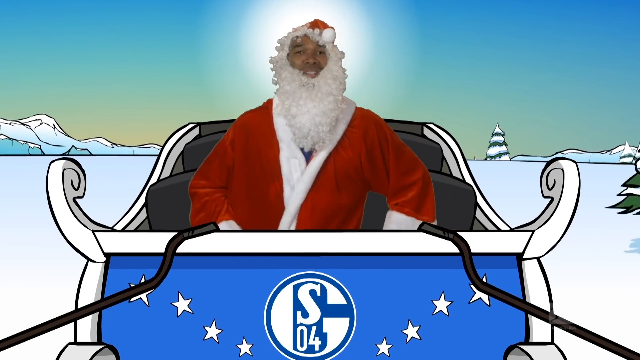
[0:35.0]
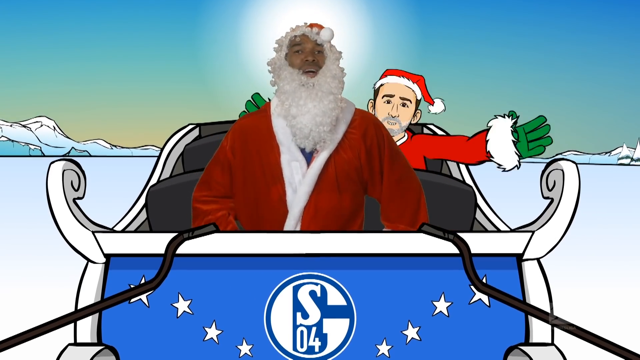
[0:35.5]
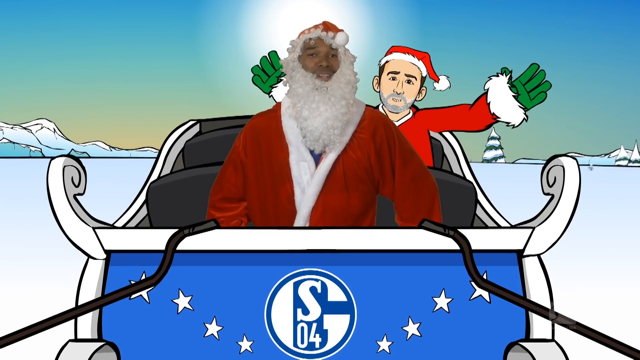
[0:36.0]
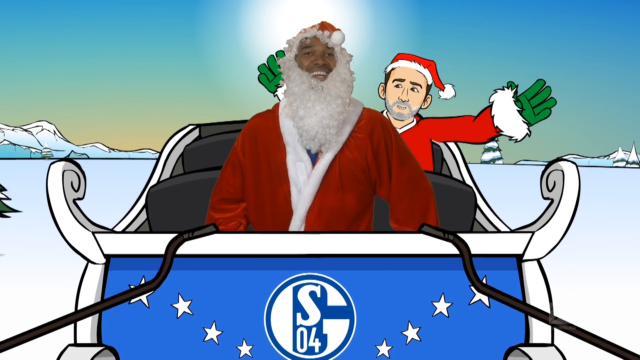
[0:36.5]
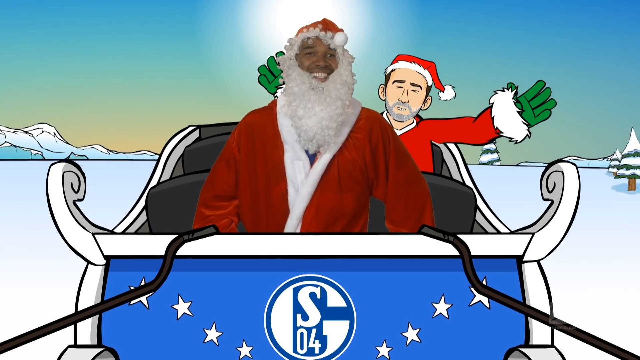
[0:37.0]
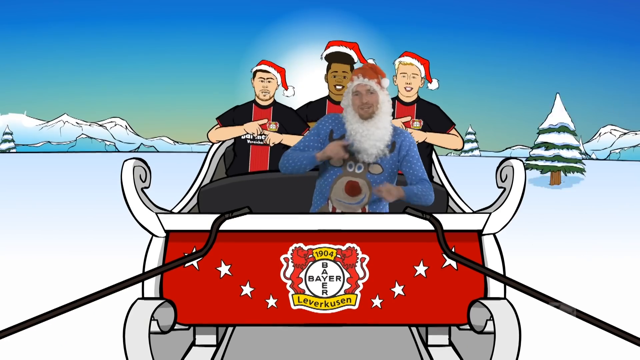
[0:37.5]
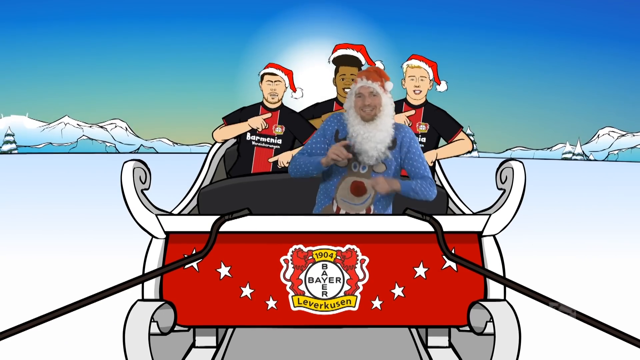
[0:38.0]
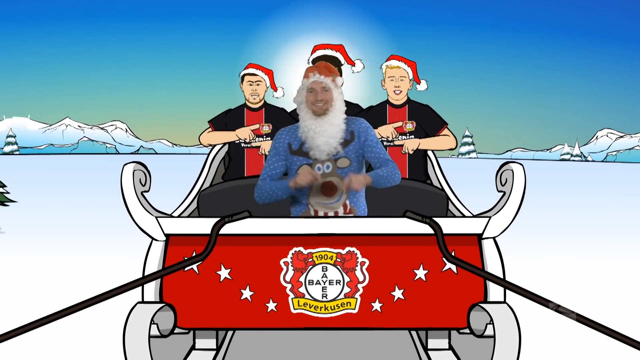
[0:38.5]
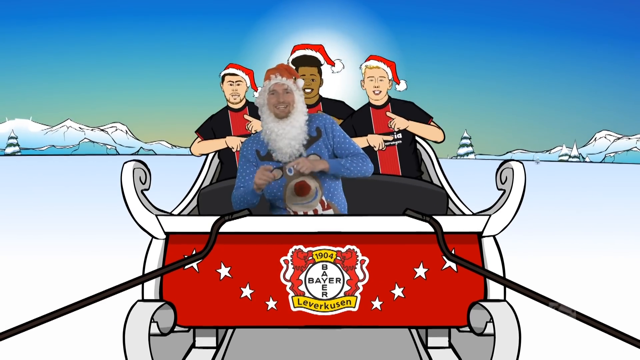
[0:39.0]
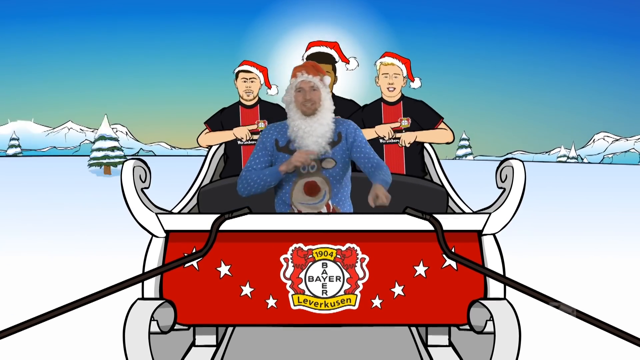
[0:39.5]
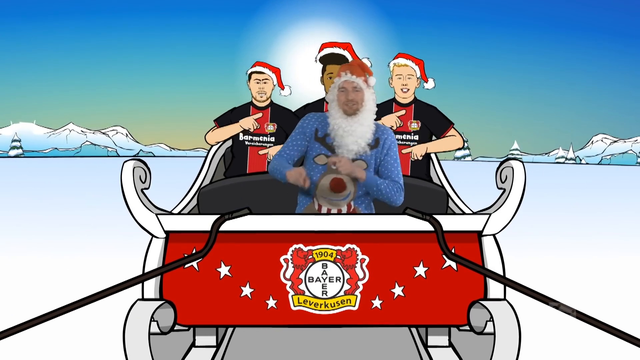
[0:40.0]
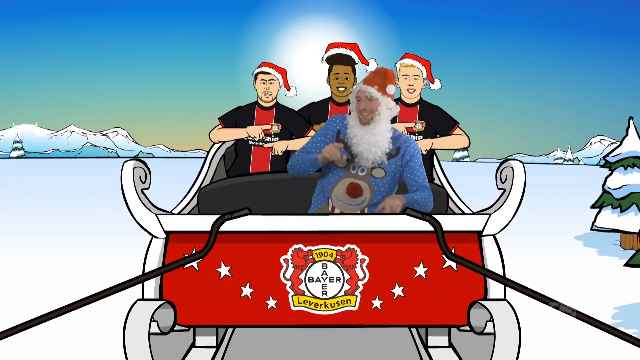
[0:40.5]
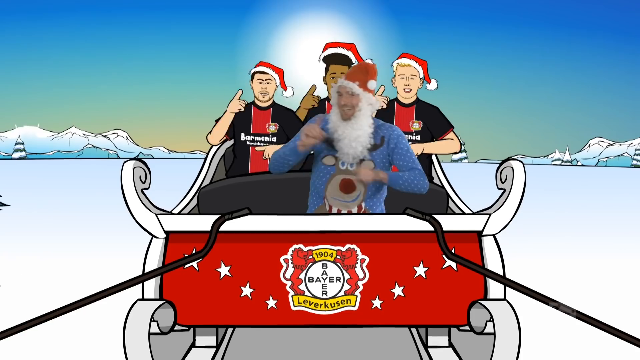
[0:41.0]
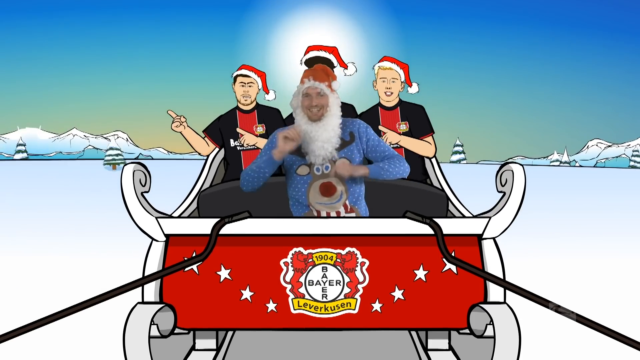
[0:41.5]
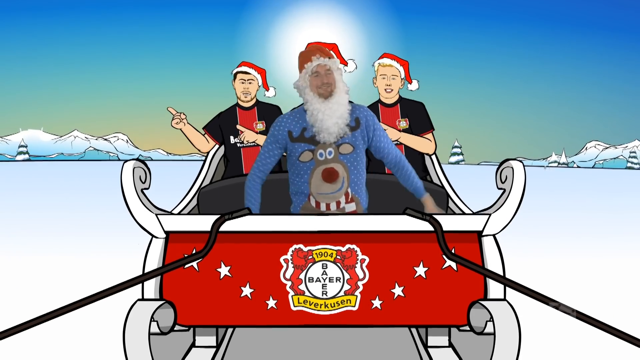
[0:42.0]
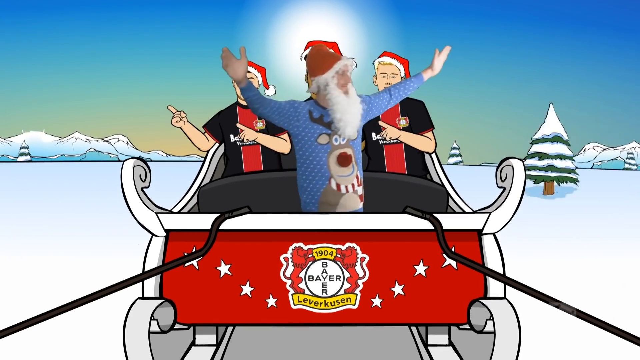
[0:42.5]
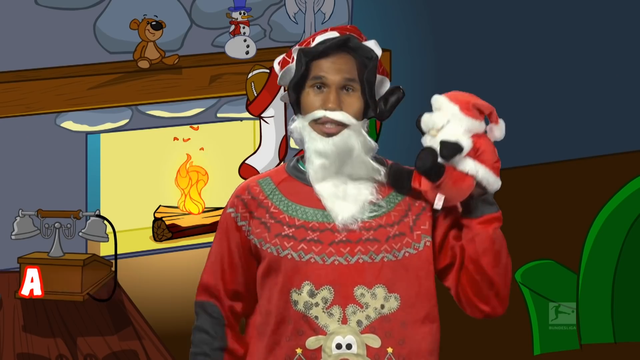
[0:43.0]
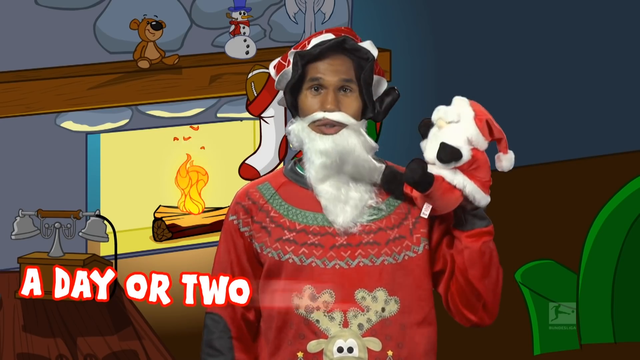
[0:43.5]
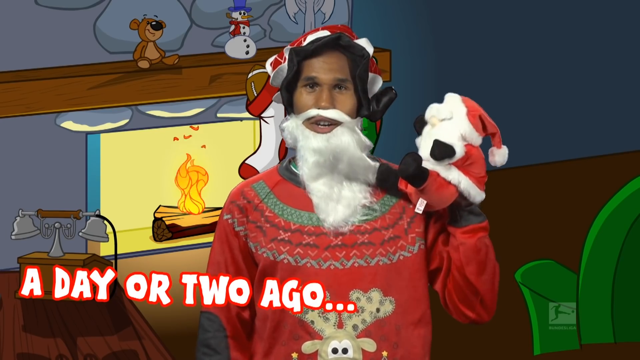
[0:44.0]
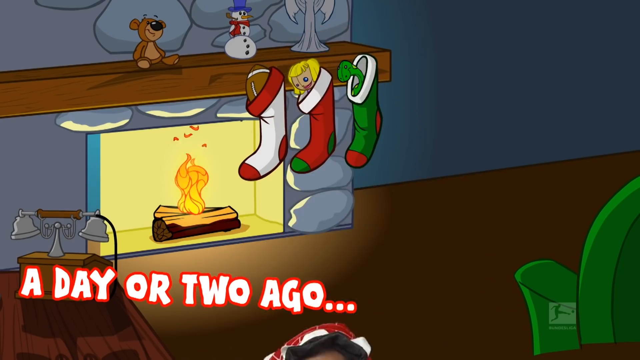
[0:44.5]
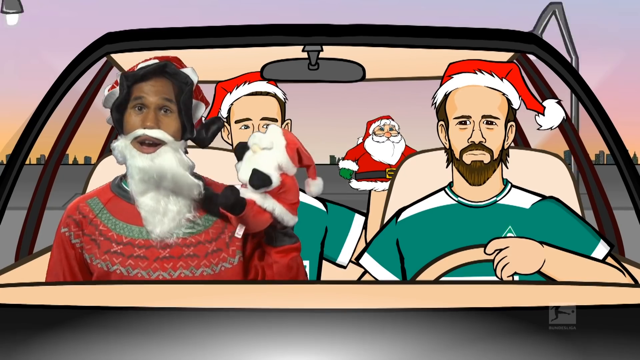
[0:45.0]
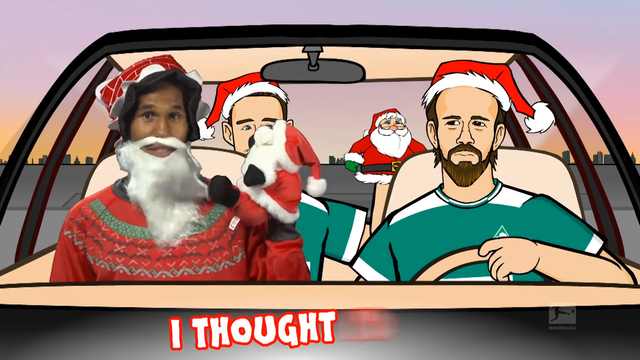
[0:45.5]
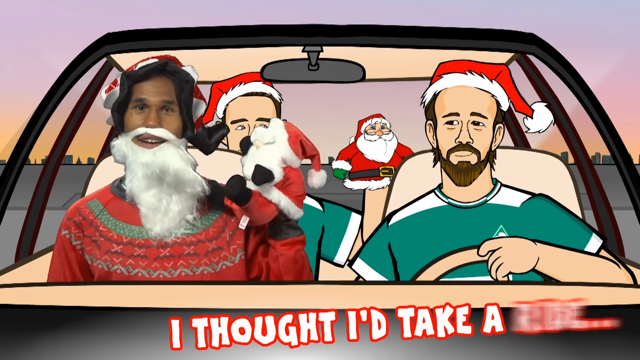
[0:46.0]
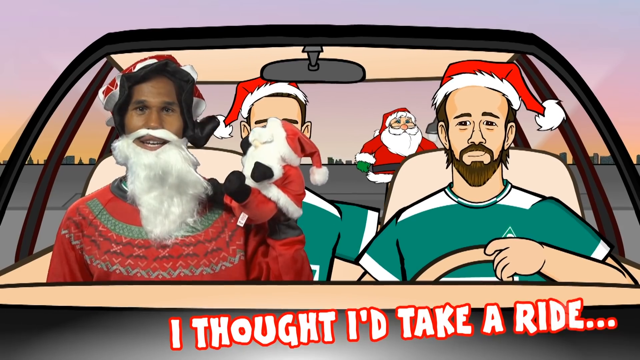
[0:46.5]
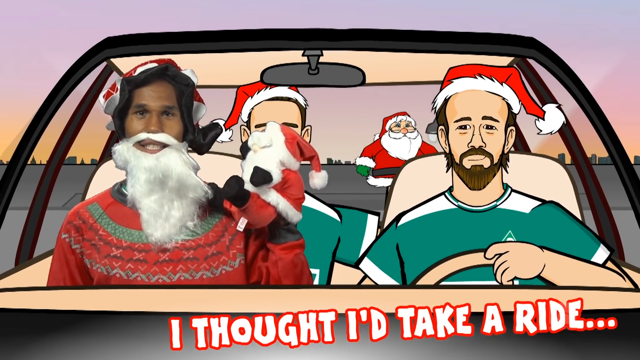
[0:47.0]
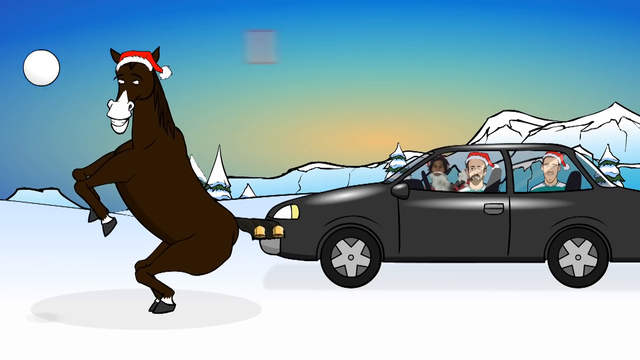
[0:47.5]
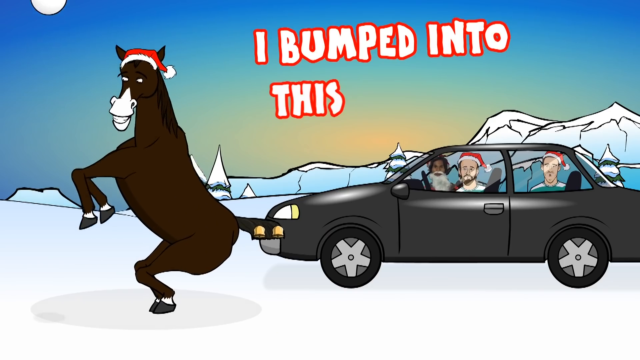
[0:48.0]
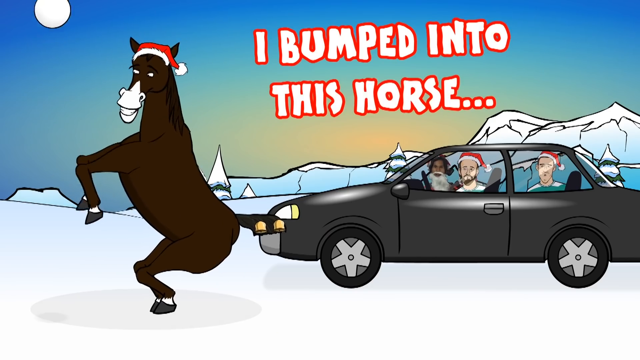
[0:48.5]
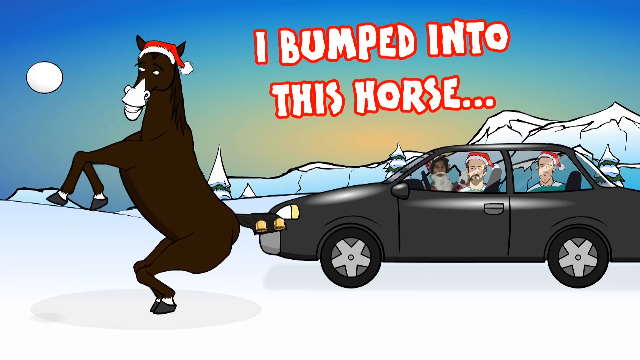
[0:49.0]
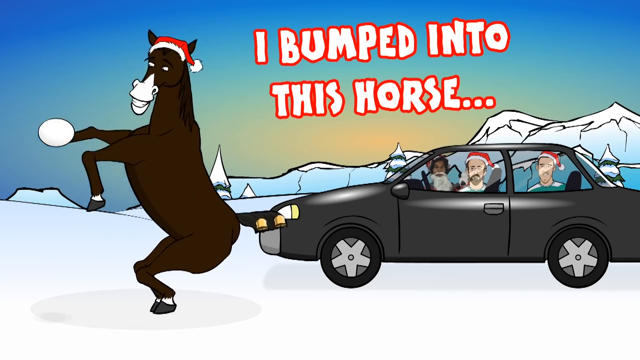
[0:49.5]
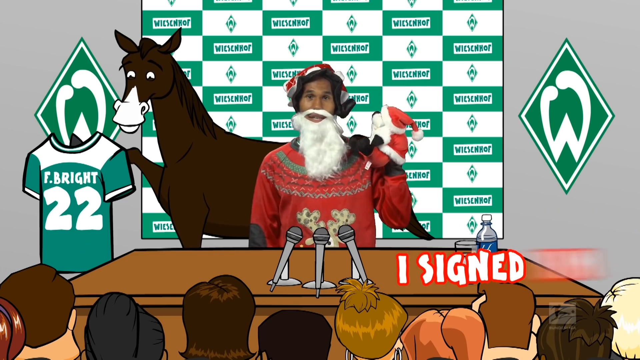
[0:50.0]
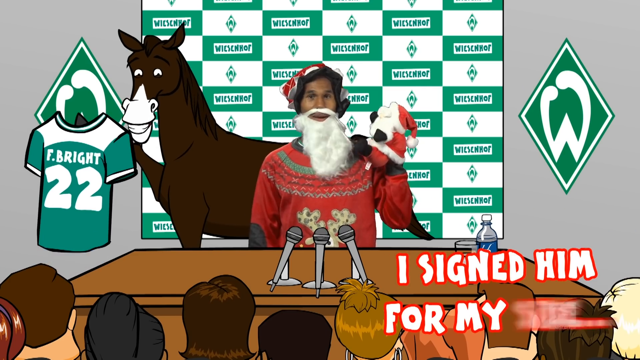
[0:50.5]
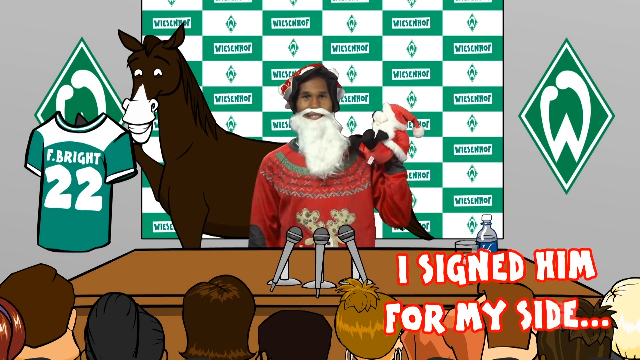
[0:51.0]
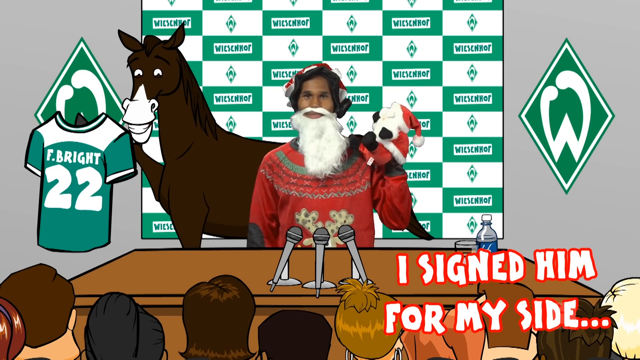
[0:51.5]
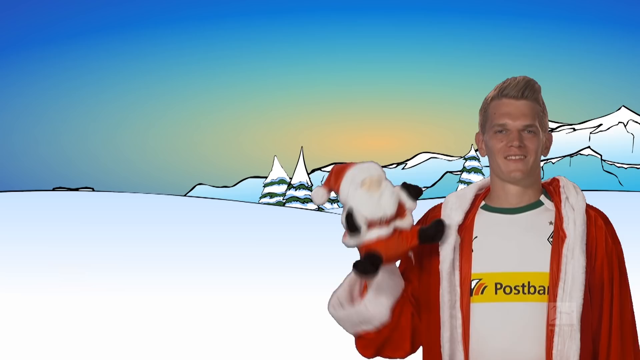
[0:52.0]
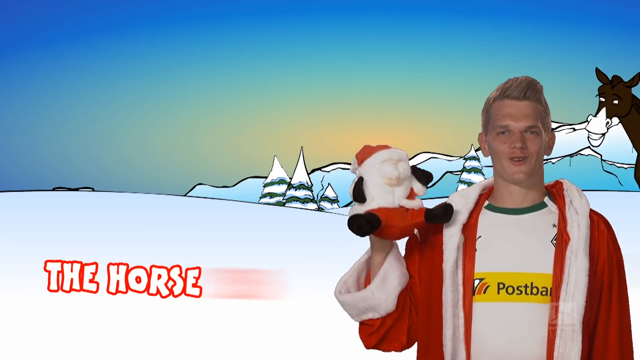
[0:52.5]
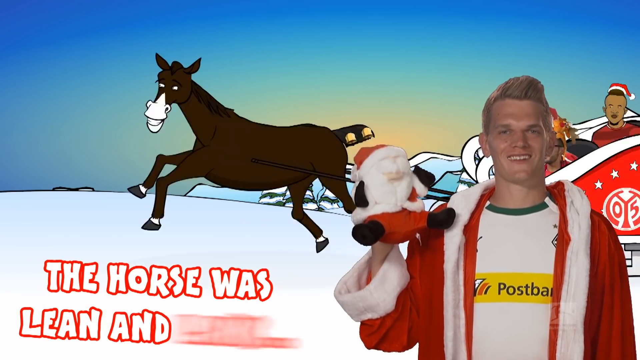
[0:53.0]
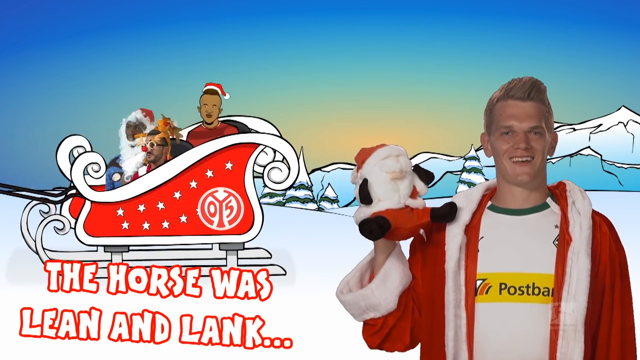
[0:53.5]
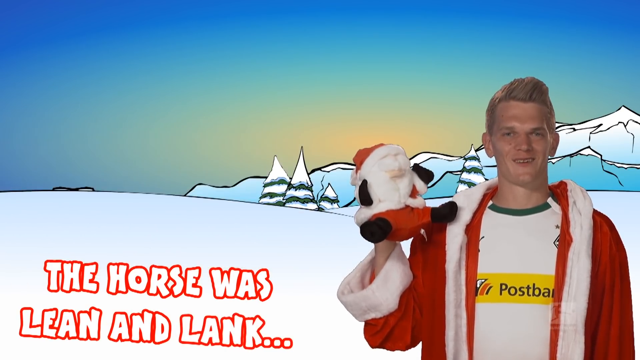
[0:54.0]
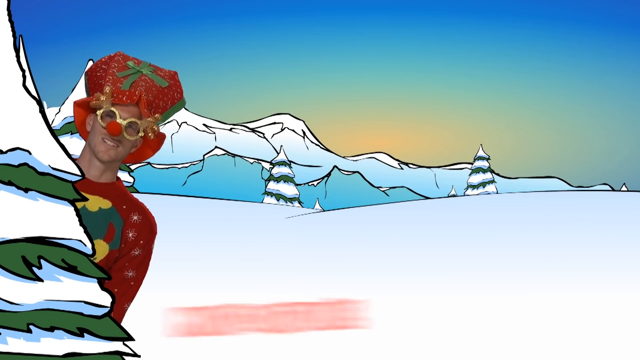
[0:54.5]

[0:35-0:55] At first only the man in the blue sleigh is shown; then an animated man pops up behind him, wearing another Santa suit, a Santa hat and green gloves, with his arms out, sitting in the back. The camera pans to a different sleigh with a man in another reindeer sweater, a Santa beard and hat. Behind him are three men in black and red shirts and Santa hats who apparently sing and do a little dance, going back and forth. The camera pans to a real man standing in front of an animated scene with a fireplace and hanging stockings. He wears a Santa beard, a sweater and what looks like a Mrs. Claus hat, and has a Santa puppet on his left hand, with the words "a day or two ago". The same man is then in a car with two other men: one driving in a green and white shirt and a Santa hat, and the one behind him in the same outfit, also with a Santa puppet on his hand. He says "I thought I'd take a ride, I bumped into this horse", and the mule from the beginning appears, standing on its hind legs and hitting a snowball off its front feet. The man from the car with the puppet is then at something like a sports press conference, with the mule sitting behind him, and a jersey reading "F-Bright 22" is held up. The words "I signed him for my side" appear. The mule then runs outside, with the words "the horse was mean and lanky", and the man is now a real person rather than the puppet. The man from the very beginning, with the strange glasses and what looks like a Rudolph nose, pops up from behind a tree with the words "misfortune seemed".